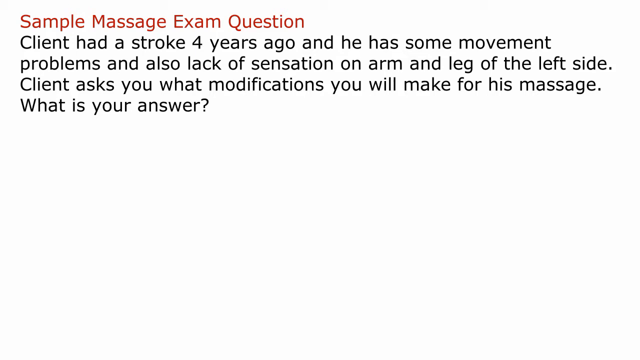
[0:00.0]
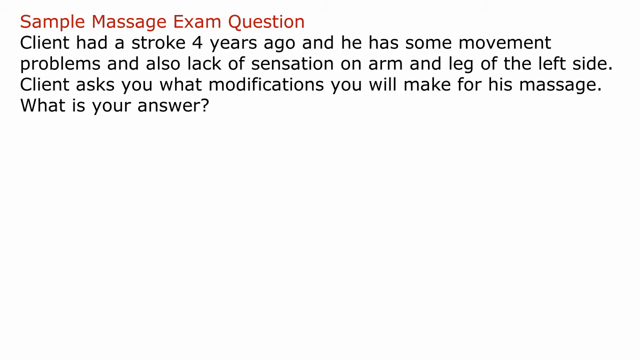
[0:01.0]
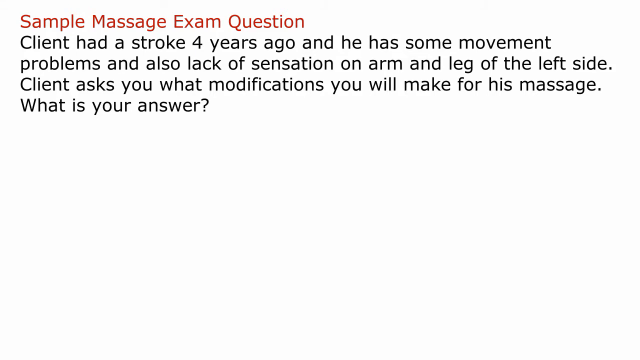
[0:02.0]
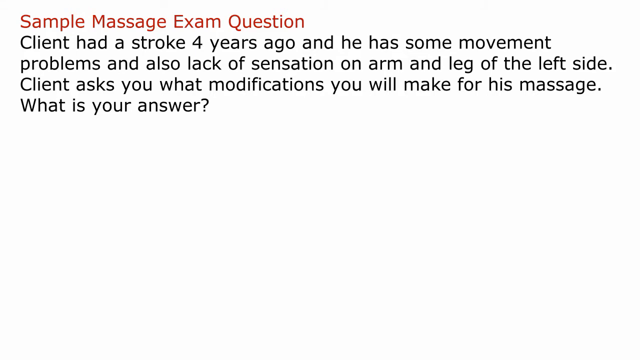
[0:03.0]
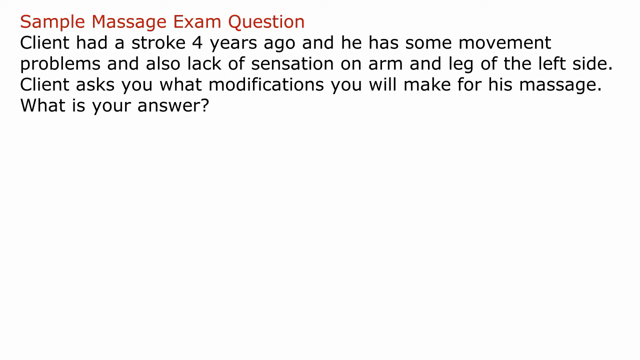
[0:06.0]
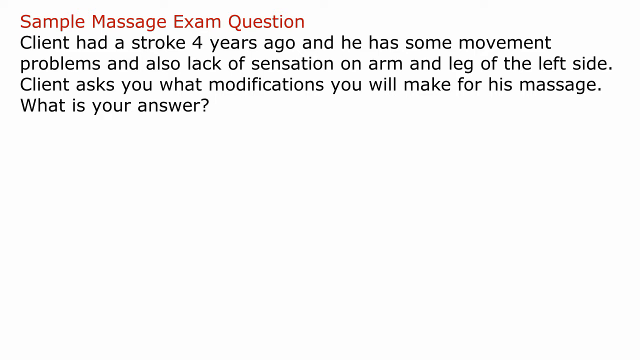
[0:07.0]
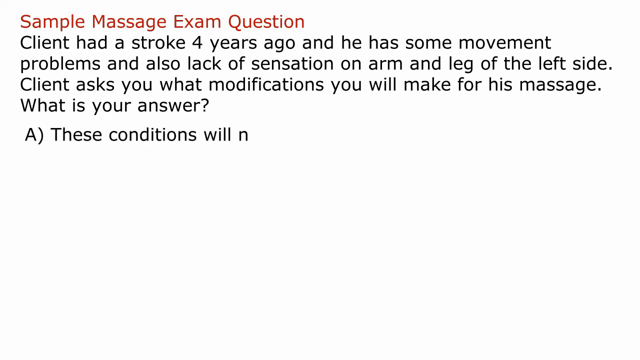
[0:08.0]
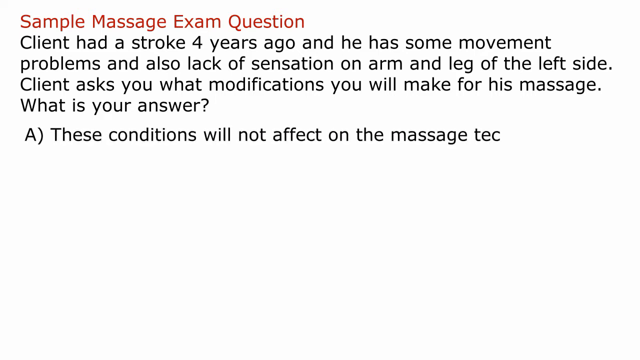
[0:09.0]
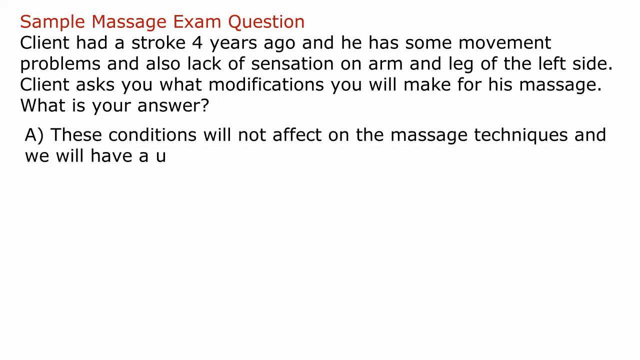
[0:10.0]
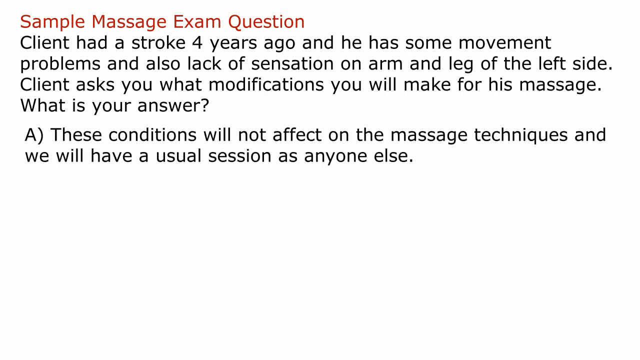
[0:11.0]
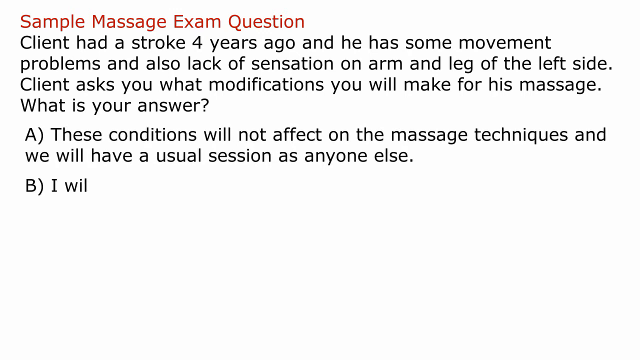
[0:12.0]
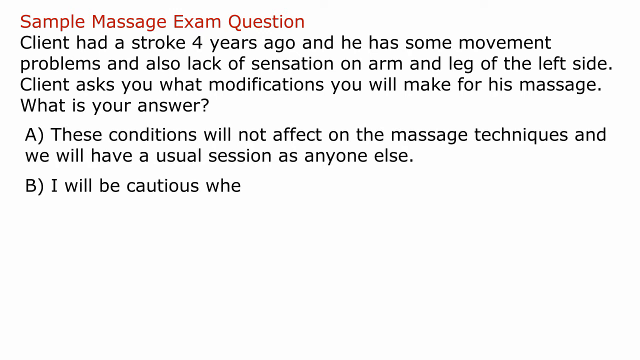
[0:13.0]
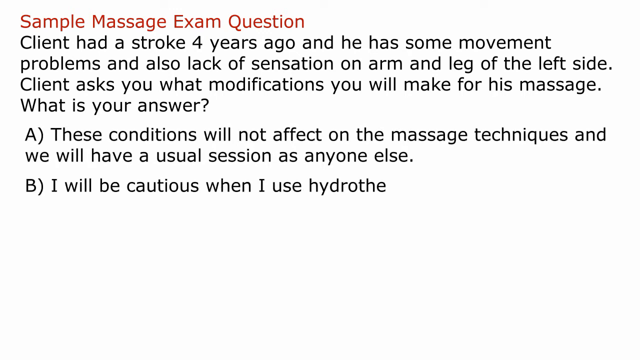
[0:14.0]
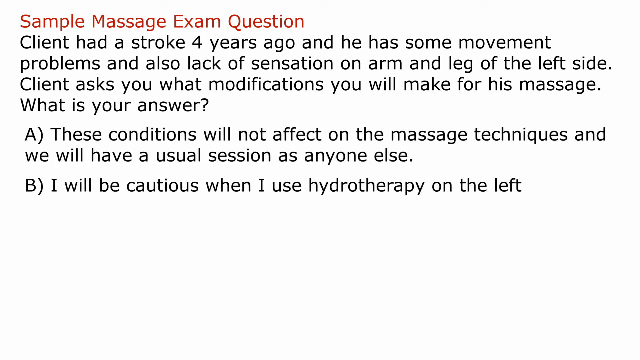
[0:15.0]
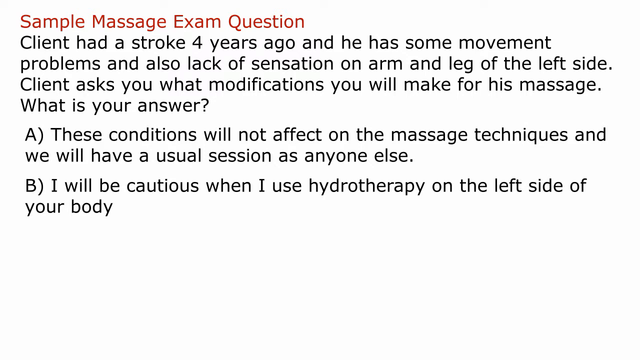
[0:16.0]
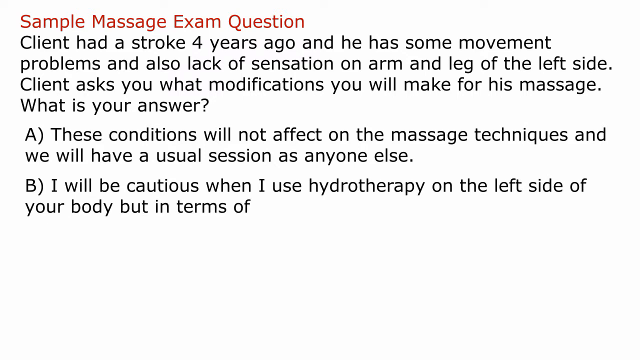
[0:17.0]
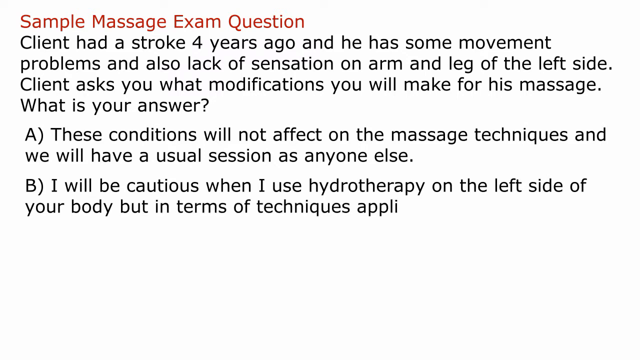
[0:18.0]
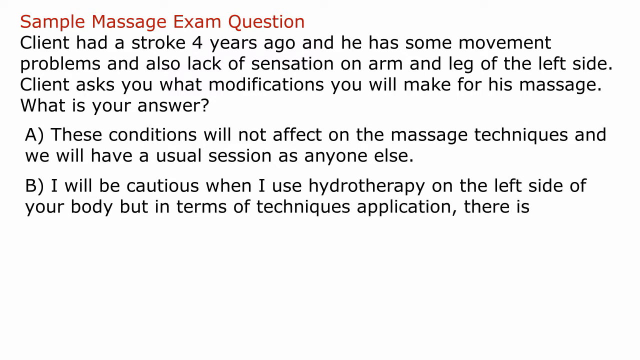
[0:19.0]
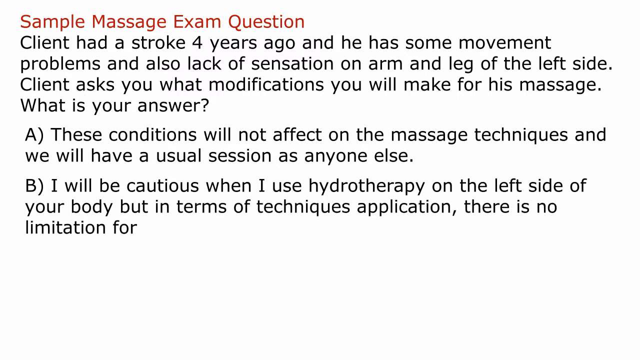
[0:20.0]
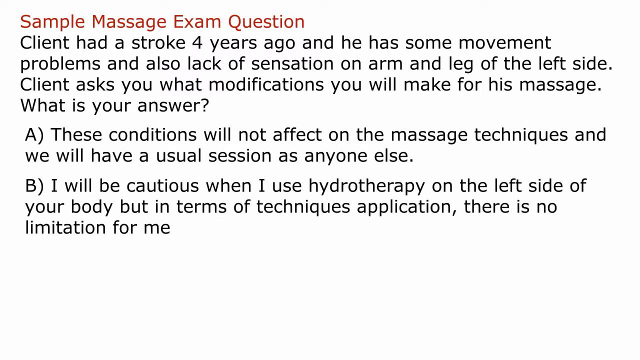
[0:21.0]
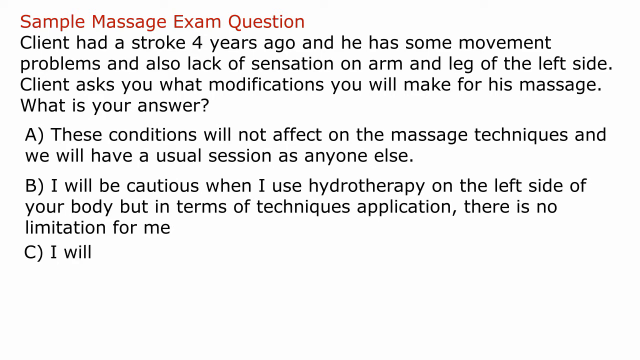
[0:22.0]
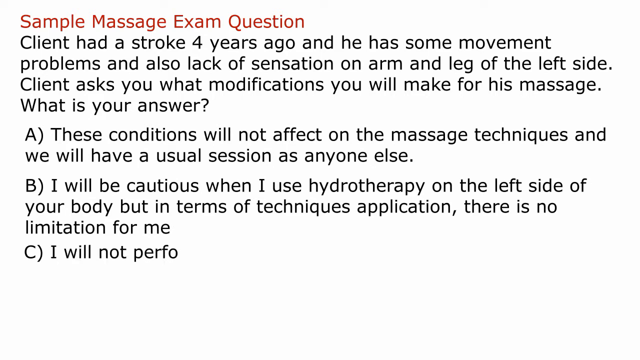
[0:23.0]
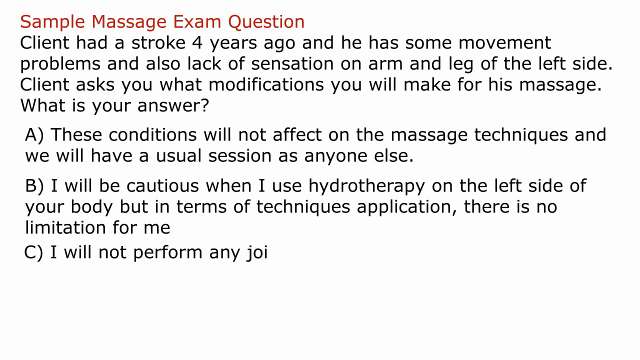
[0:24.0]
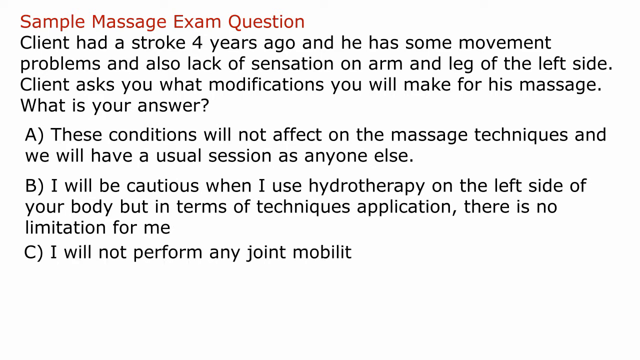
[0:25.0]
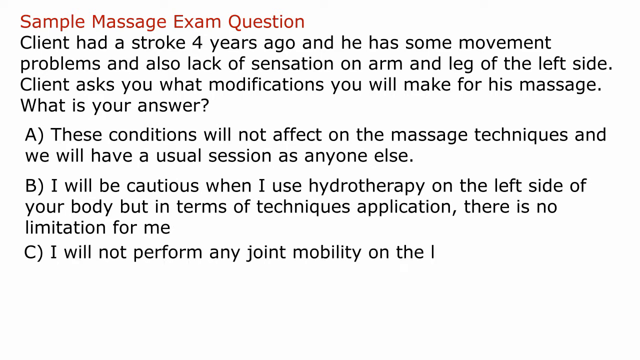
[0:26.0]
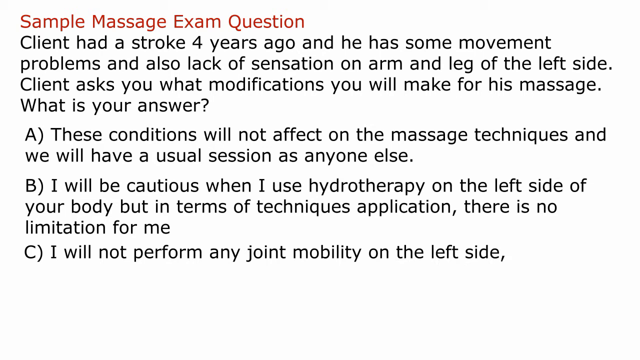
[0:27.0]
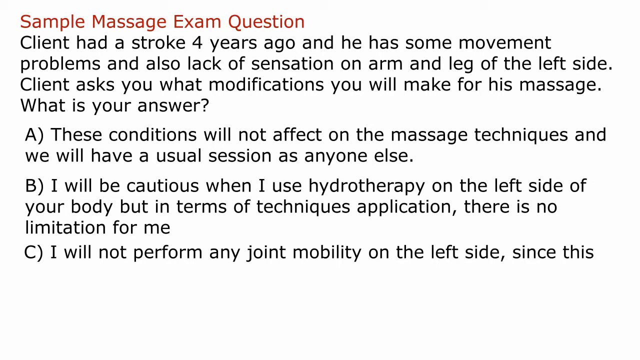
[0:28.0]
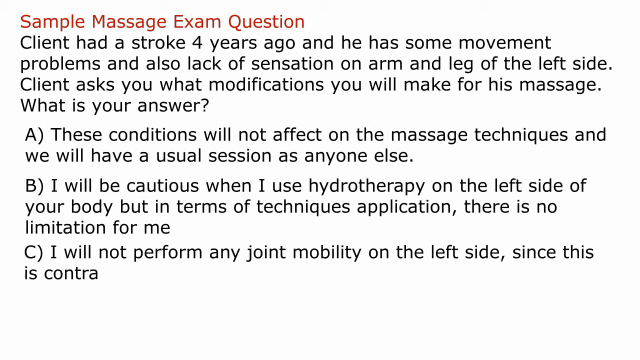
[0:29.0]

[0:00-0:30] Red and black text appears over a white background, apparently an exam question. The red text at the very top of the screen reads "sample massage exam question," and the black text right underneath reads: "client had a stroke four years ago and he has some movement problems and also lack of sensation on arm and leg of left side. And asks you what modifications you will make for his massage. What is your answer?" It is a multiple-choice question. Answer A reads "these conditions will not affect on the massage techniques, and we will have a usual session as anyone else." B reads "I will be cautious when I use hydrotherapy on the left side of your body, but in terms of techniques, applications, there is no limitation for me." C begins "I will not perform any joint mobility on the left side since this" and is cut off.